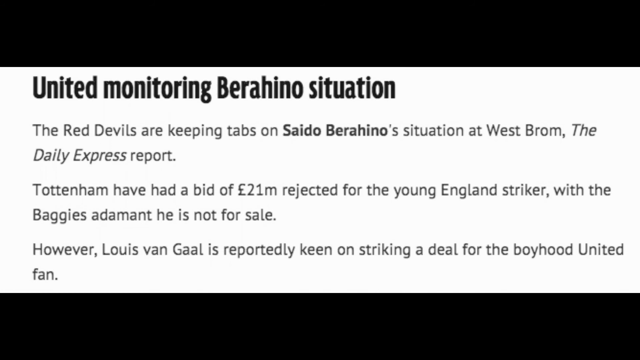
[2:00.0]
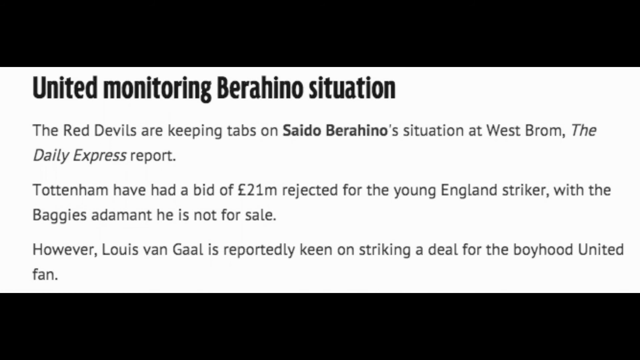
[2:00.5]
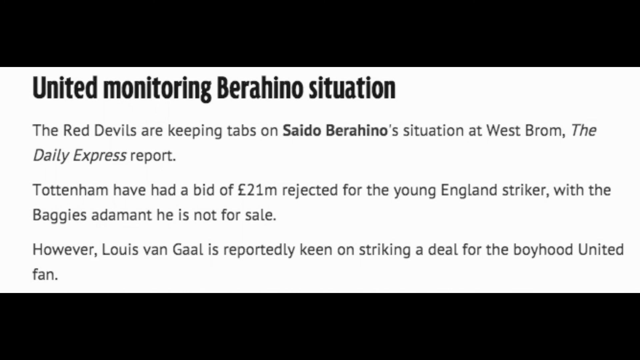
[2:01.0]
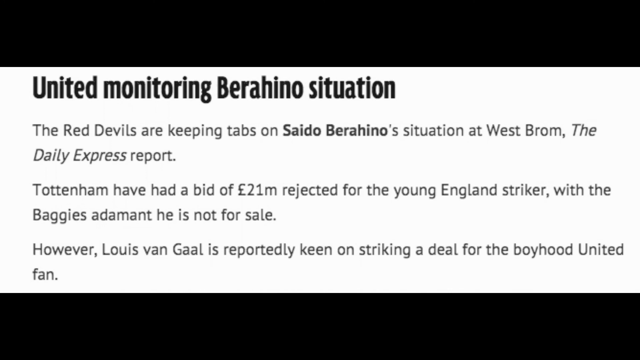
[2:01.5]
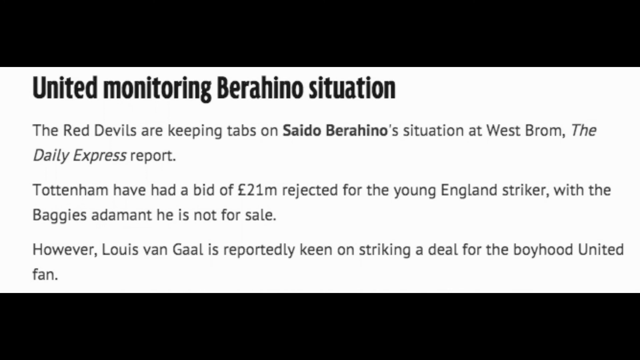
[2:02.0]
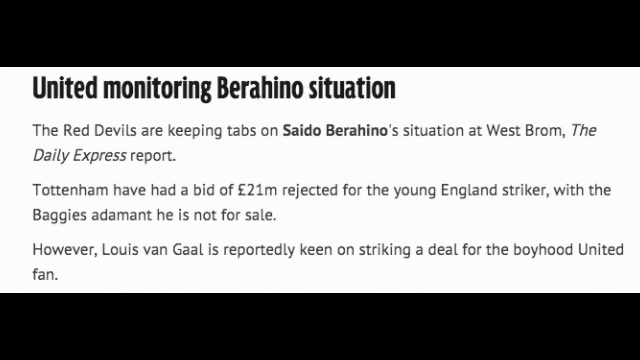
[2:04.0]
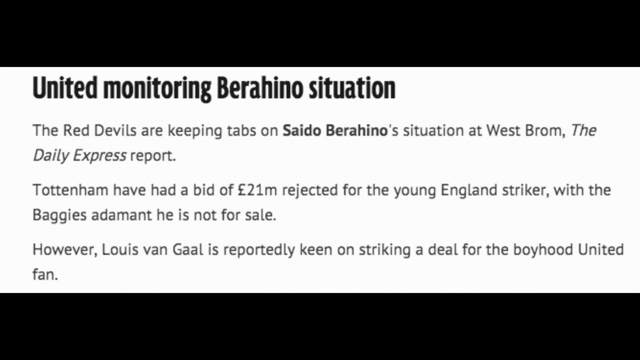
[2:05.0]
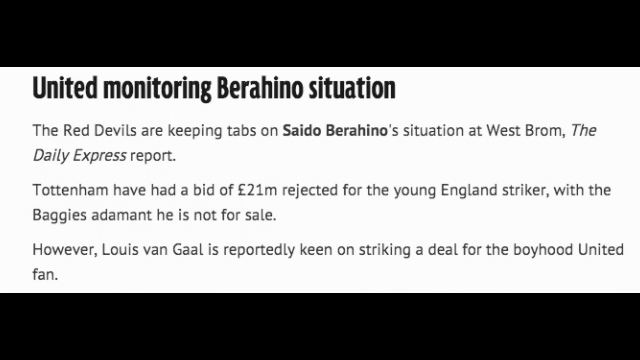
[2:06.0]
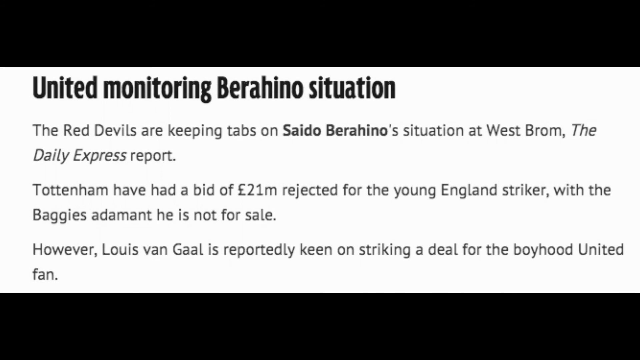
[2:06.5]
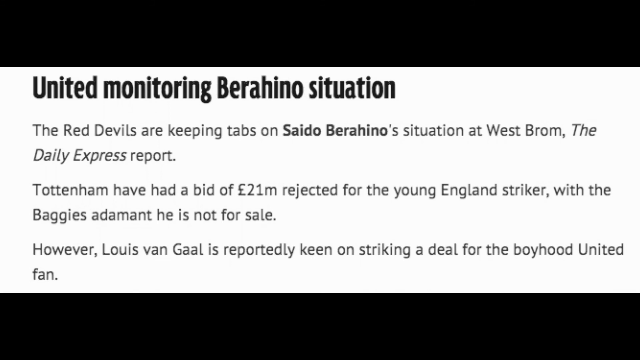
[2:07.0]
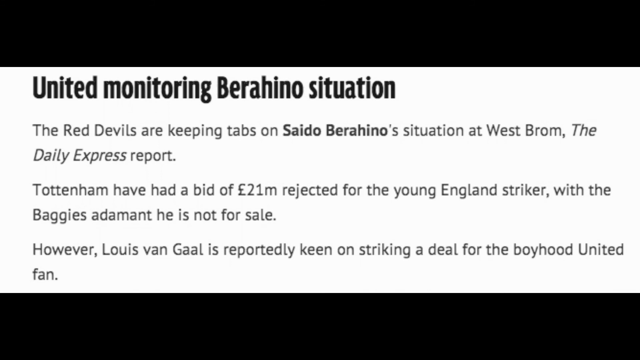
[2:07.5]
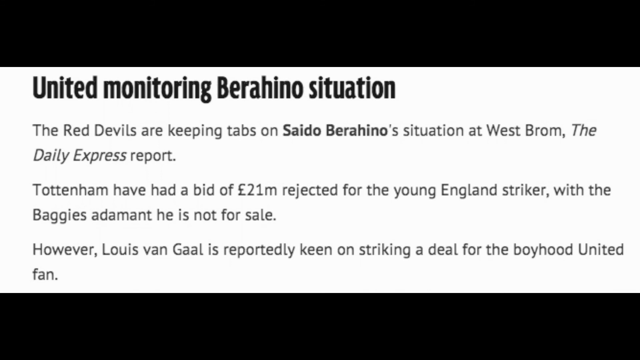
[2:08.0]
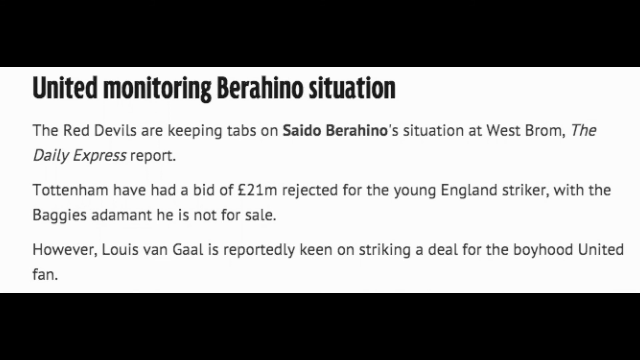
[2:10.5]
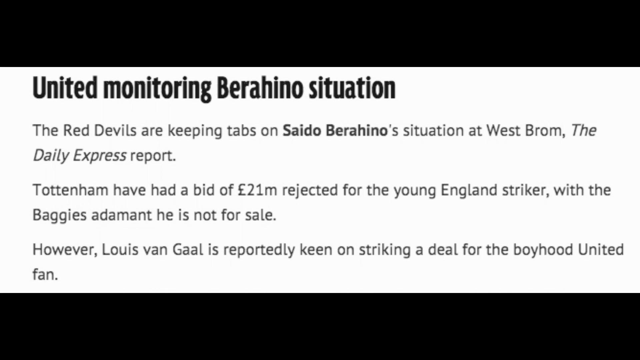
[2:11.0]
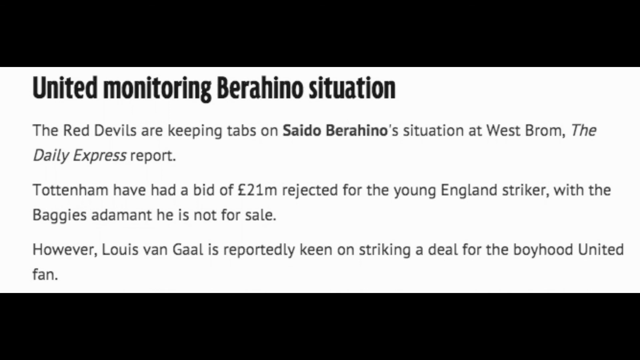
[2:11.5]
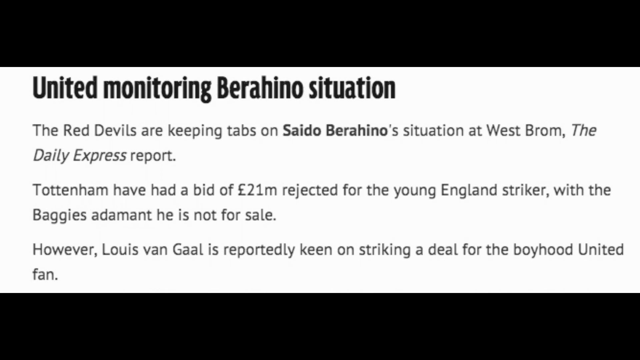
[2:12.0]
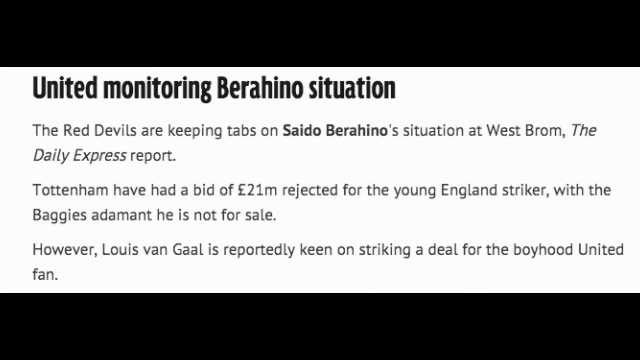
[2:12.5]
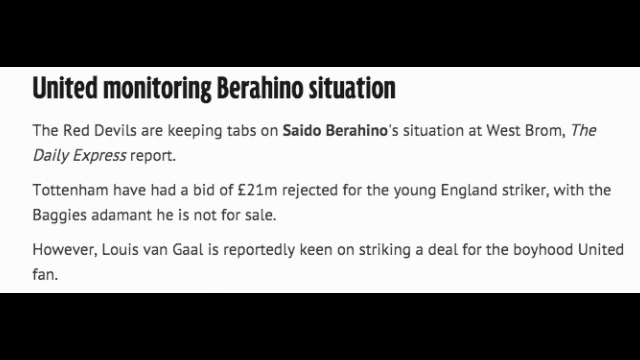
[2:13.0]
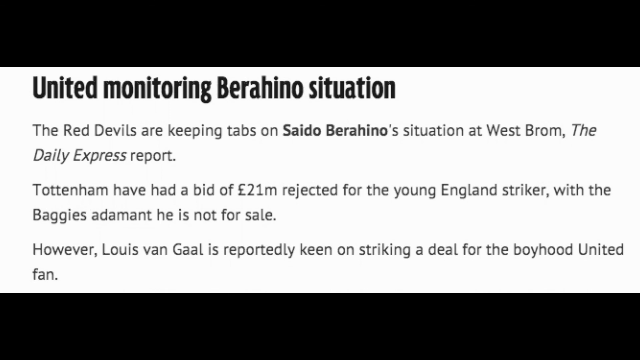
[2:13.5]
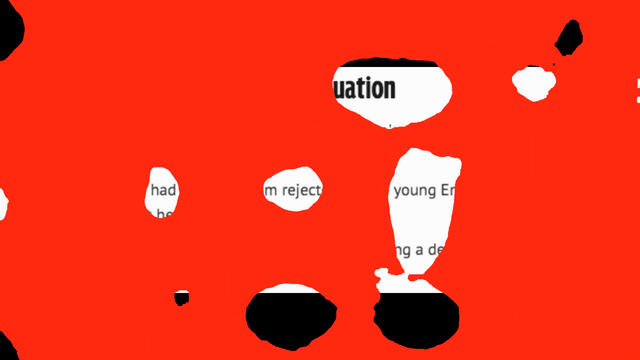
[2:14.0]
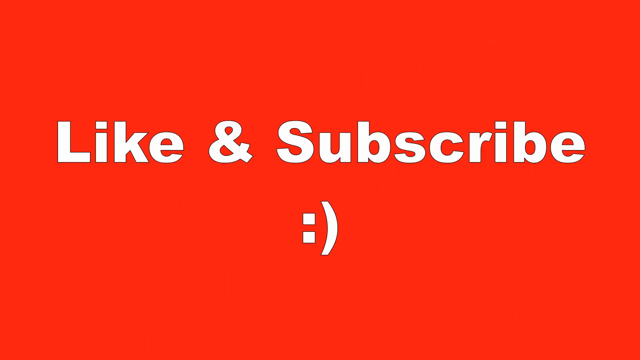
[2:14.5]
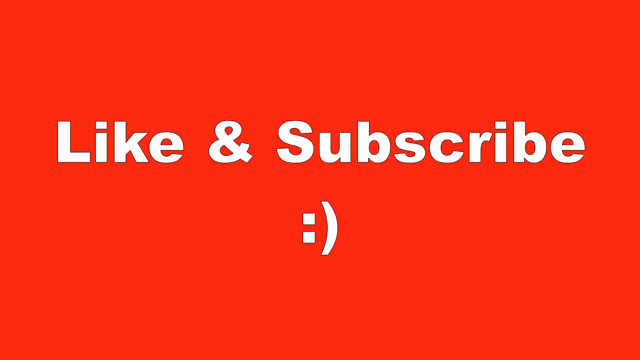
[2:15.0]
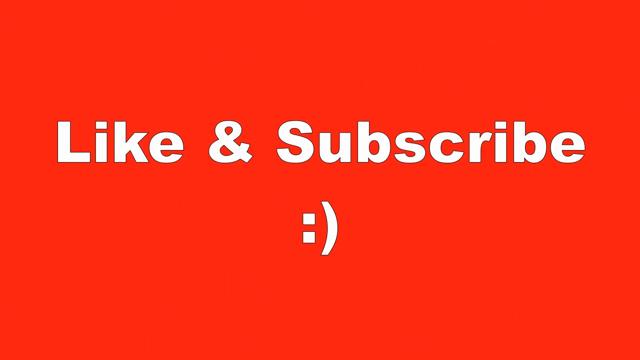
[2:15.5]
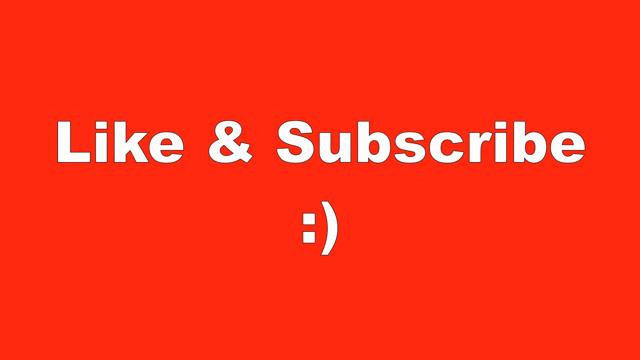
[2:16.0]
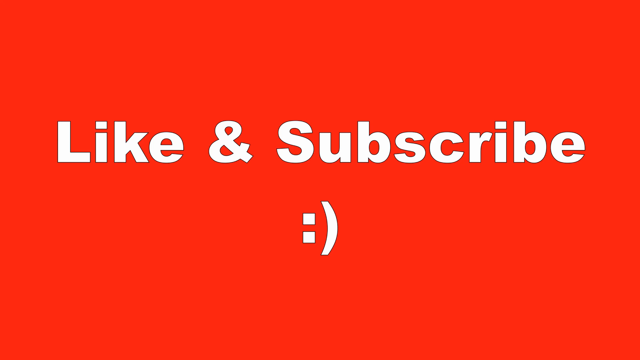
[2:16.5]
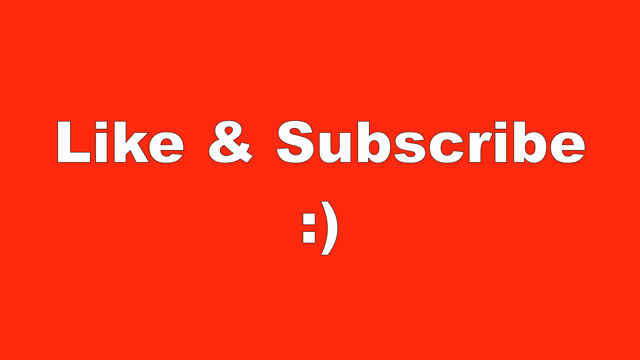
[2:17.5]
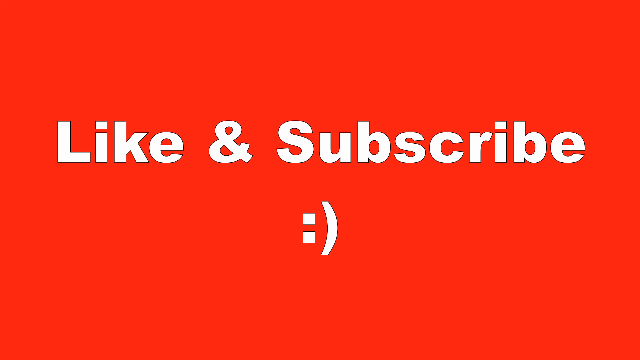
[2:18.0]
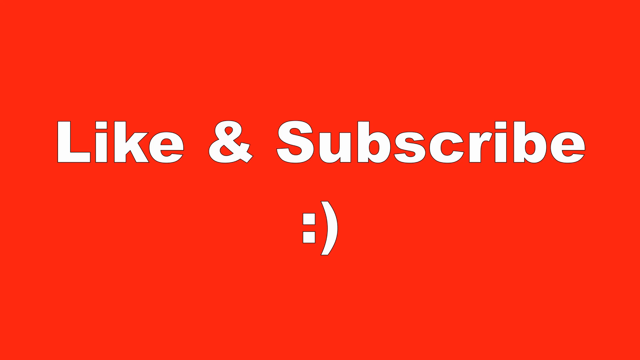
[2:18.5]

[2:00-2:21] Black text sits in the center of the screen in front of a white background, with black bars at the top and bottom narrowing the text to the center, as if it is a clip from an article. At the center left, a bold black title reads "United Monitoring Barrachino Situation." Three sentences in black lettering follow. The first reads "The Red Devils are keeping tabs on Saito Barrachino Situation at West Brom the Daily Express report," with "Saito Barrachino" in bold. The second reads "Tottenham have a bid of 21 million rejected for the young England striker with the baggies adamant he is not for sale." The third ends "is reportedly keen on striking a deal for the Boyhood United fan." The scene then transitions to a bright red background with white lettering in the center reading "like and subscribe," followed by a colon and a parenthesis forming a smiley face. Nothing further moves or appears on screen. The headline and text seem to be a teaser for a larger article.